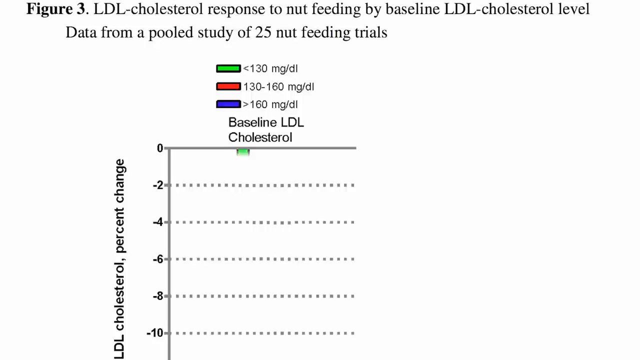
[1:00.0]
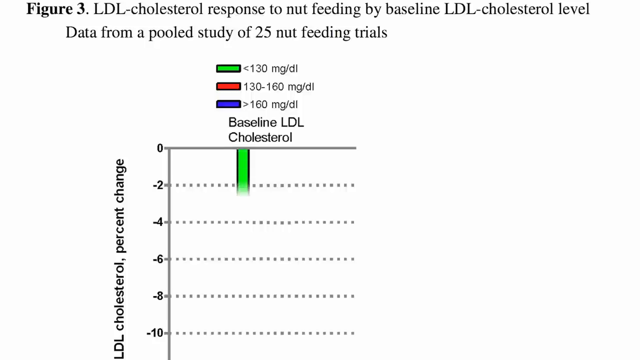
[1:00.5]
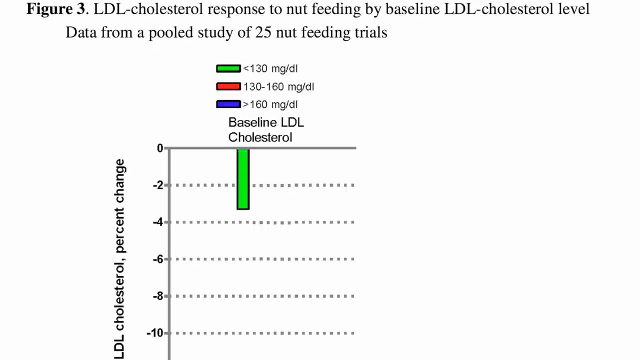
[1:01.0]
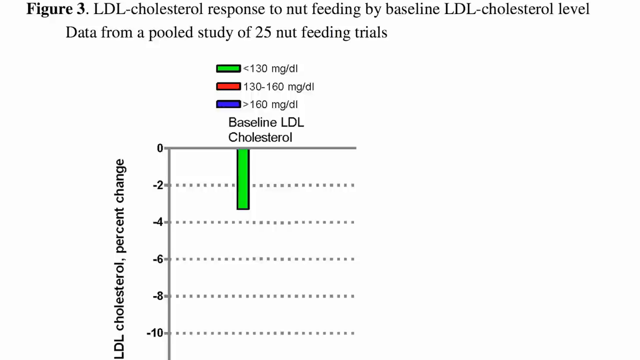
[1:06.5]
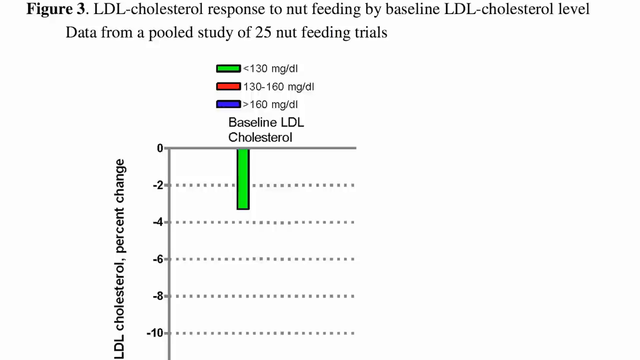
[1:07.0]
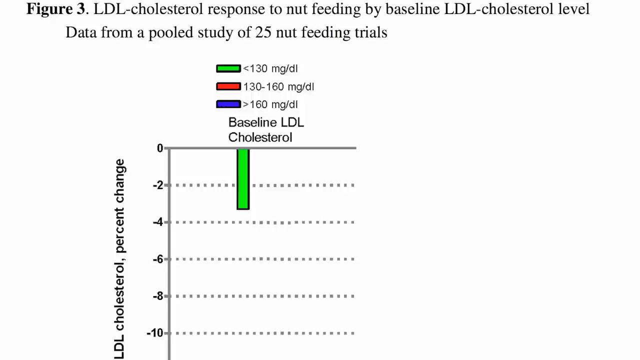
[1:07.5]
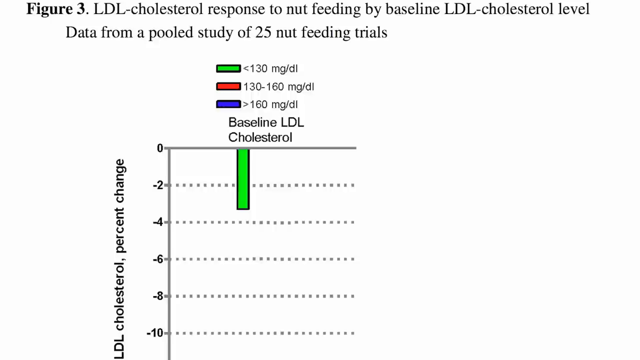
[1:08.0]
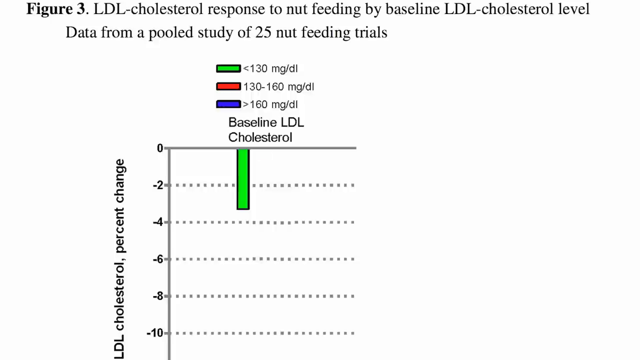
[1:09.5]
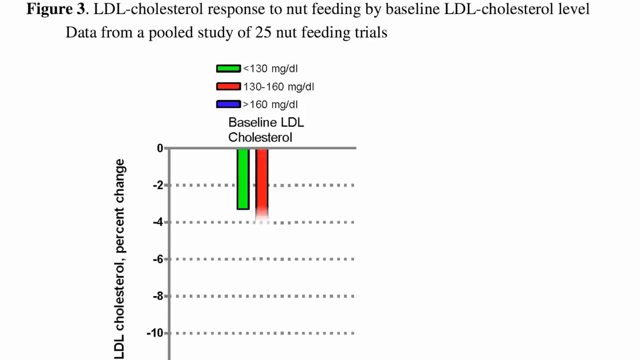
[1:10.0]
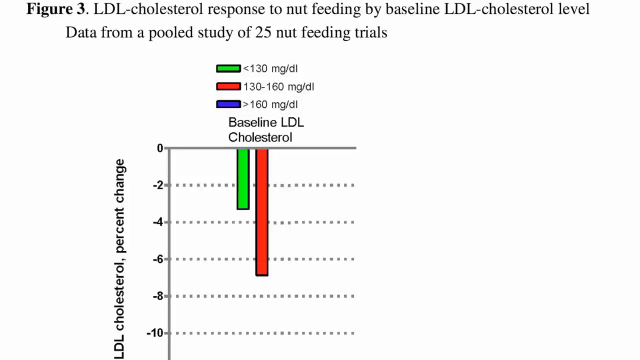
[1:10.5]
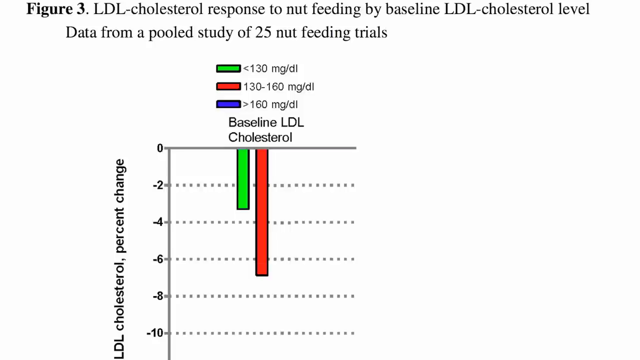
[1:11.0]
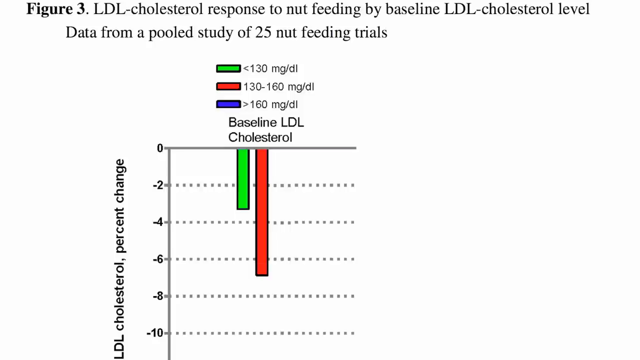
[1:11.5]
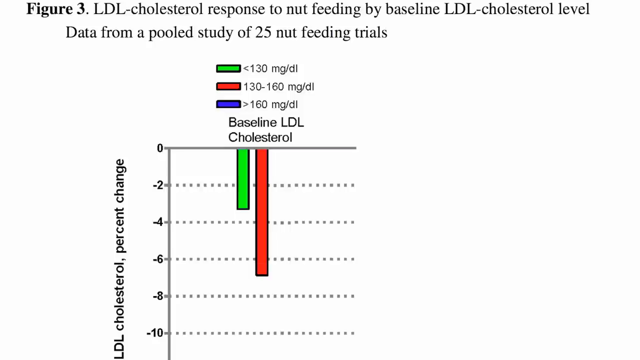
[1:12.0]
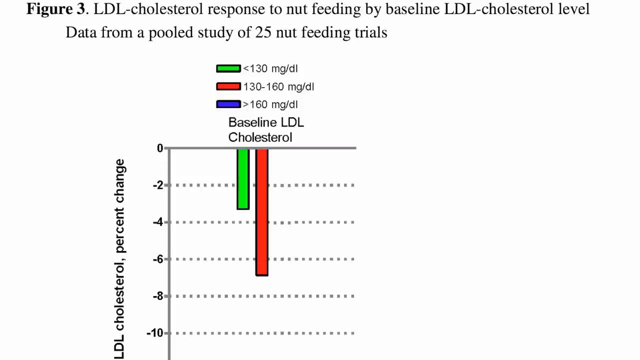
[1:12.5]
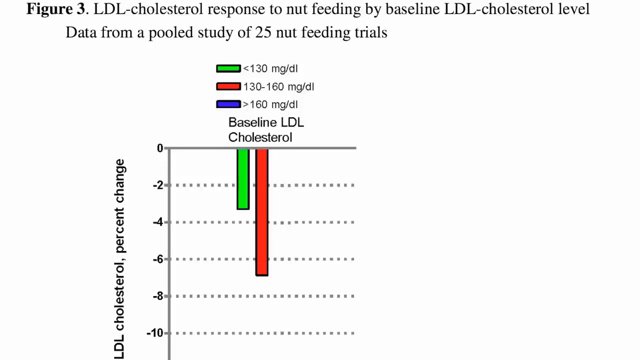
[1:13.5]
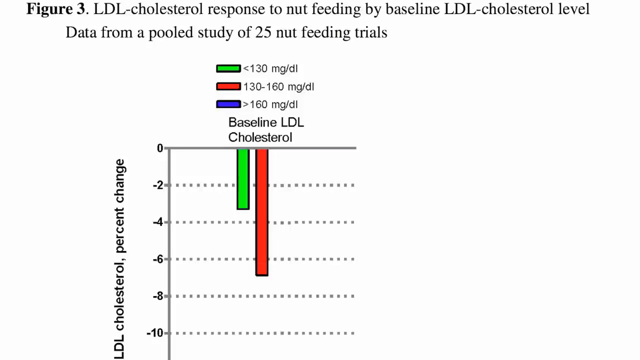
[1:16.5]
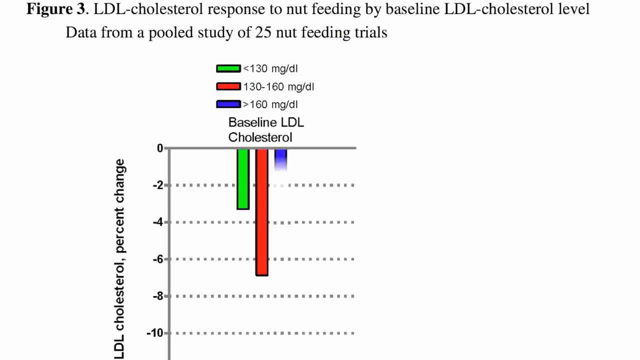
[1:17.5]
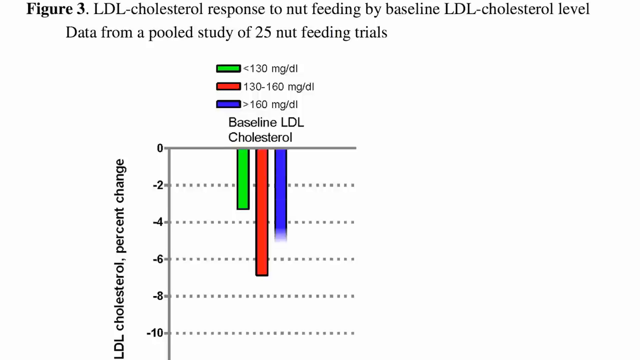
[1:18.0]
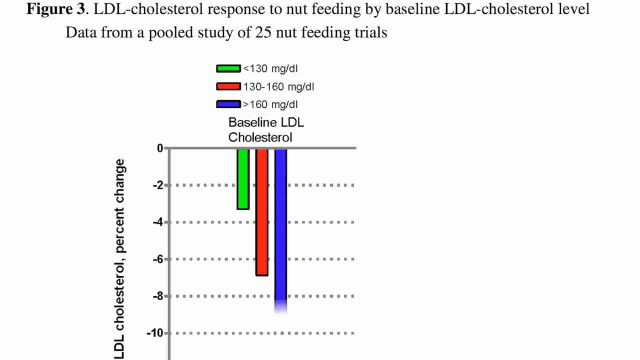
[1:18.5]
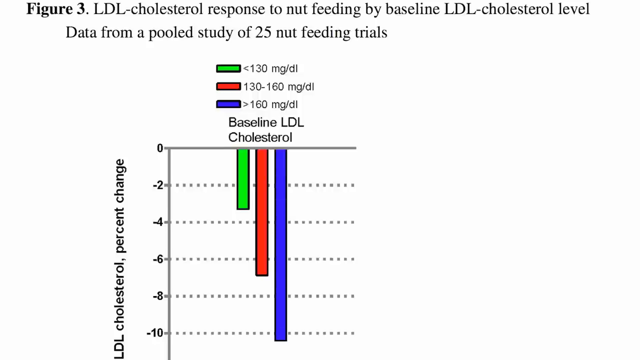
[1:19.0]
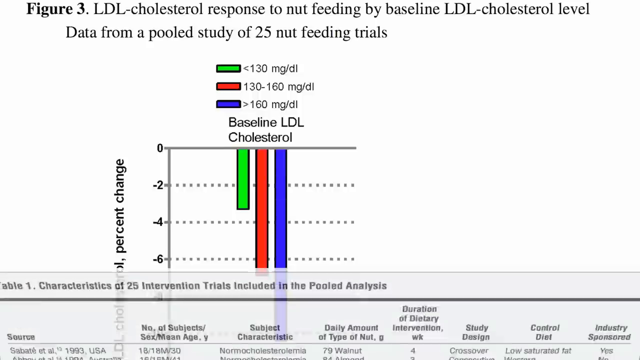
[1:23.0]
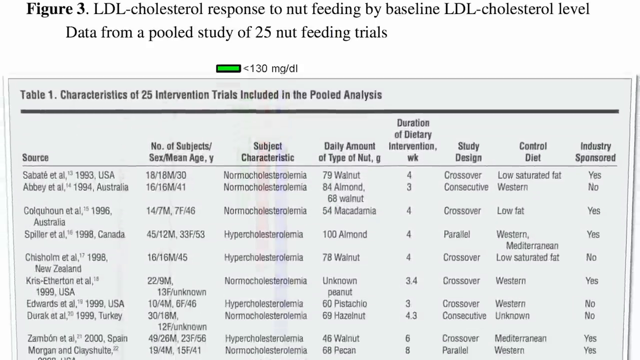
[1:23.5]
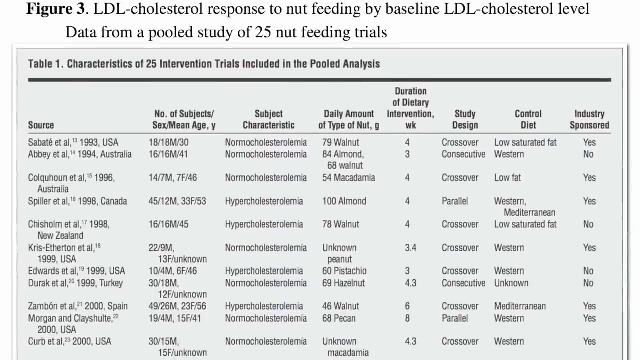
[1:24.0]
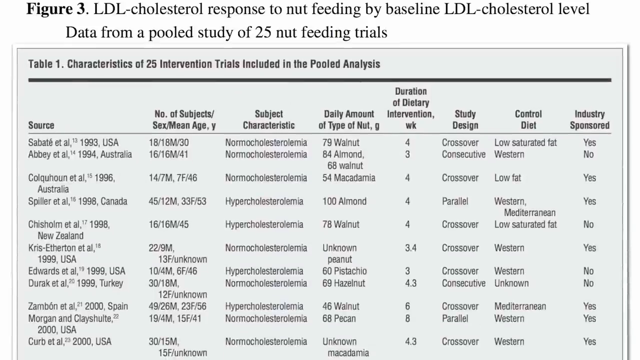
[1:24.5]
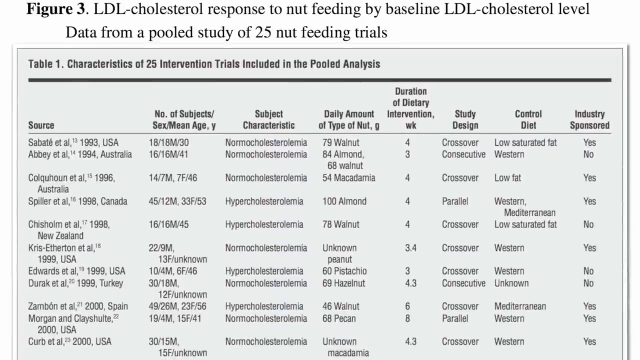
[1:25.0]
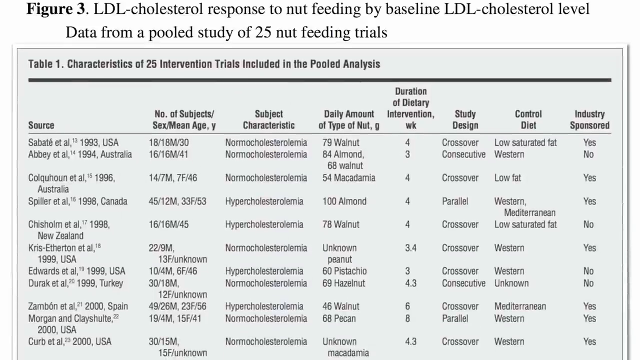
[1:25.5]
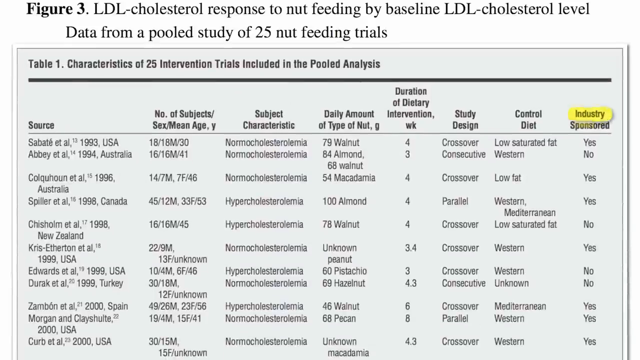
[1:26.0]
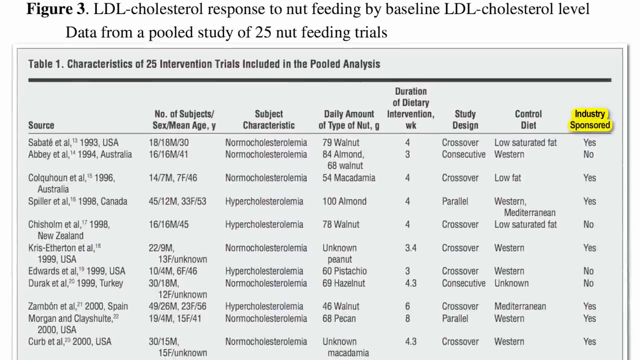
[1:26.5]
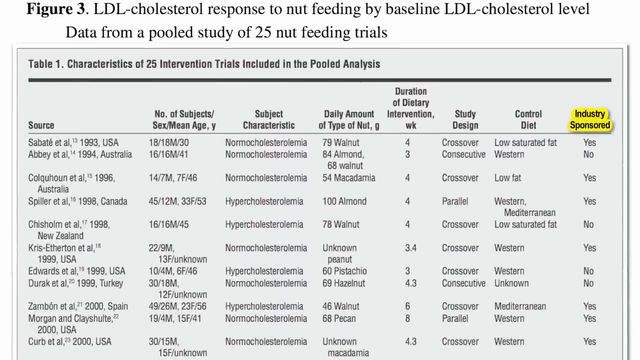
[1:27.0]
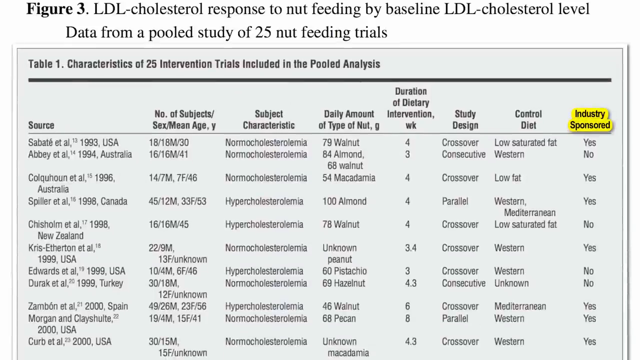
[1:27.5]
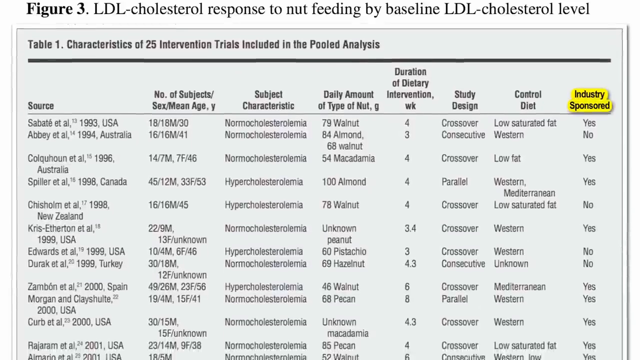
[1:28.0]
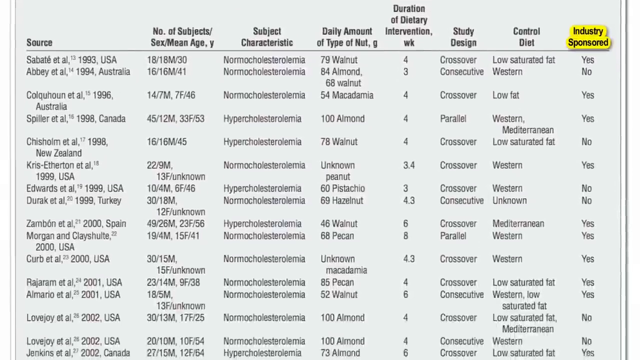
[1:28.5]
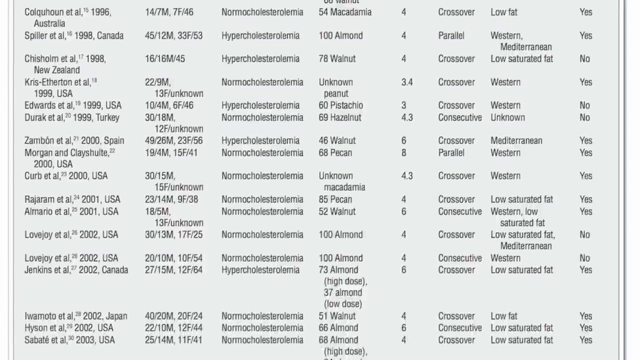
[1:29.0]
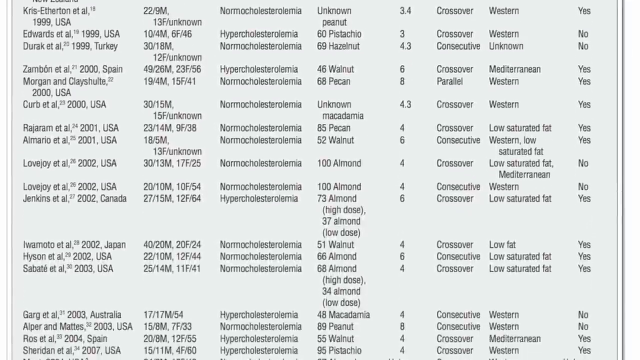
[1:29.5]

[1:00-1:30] The LDL cholesterol graph is on screen, with "LDL cholesterol percentage change" on the left-hand side and a scale running from zero at the top down through negative 2, negative 4, negative 6, negative 8 and negative 10. At the top of the graph it says "baseline LDL cholesterol." A green bar for under 130 mg/dL starts from the top at zero. A red rectangular bar for 130-160 mg/dL goes further down to about negative 7. A blue bar for greater than 160 mg/dL goes down past negative 10. A new table then pops up over the graph: table one, "characteristics of 25 intervention trials included in the pooled analysis." Everything in it is black except a part reading "industry sponsored," which is highlighted in yellow. The picture then starts moving down.